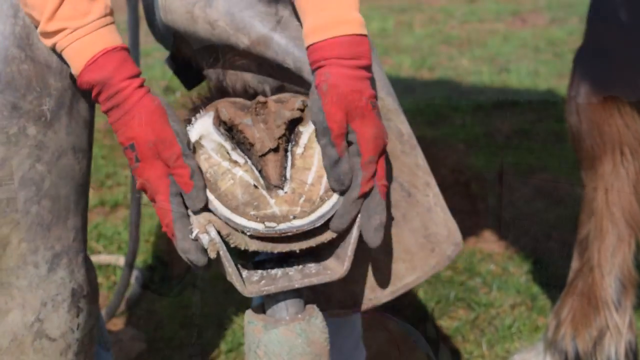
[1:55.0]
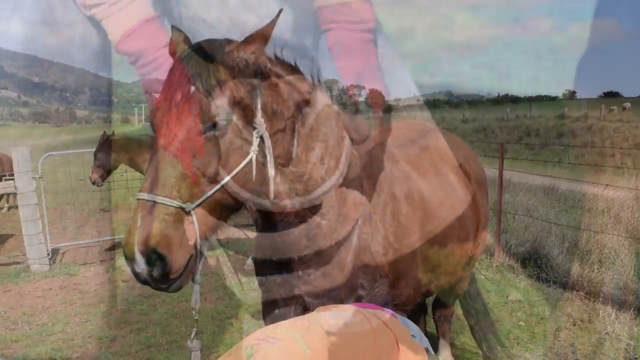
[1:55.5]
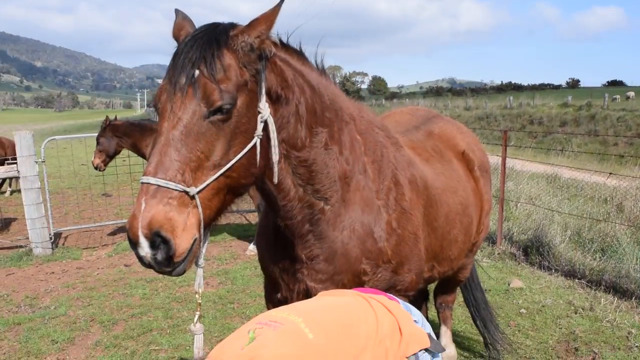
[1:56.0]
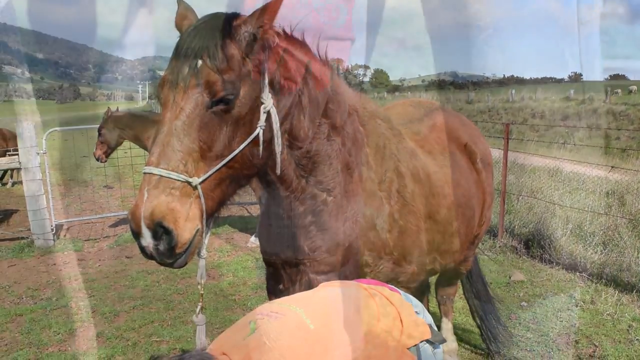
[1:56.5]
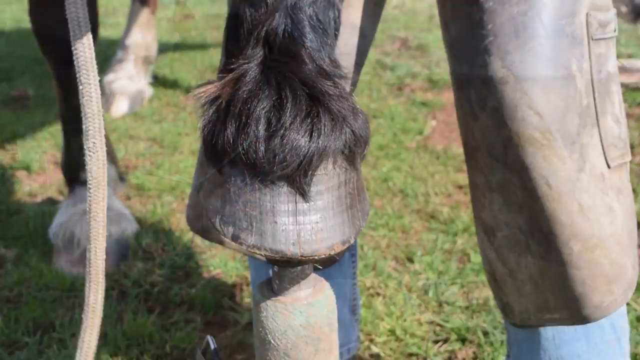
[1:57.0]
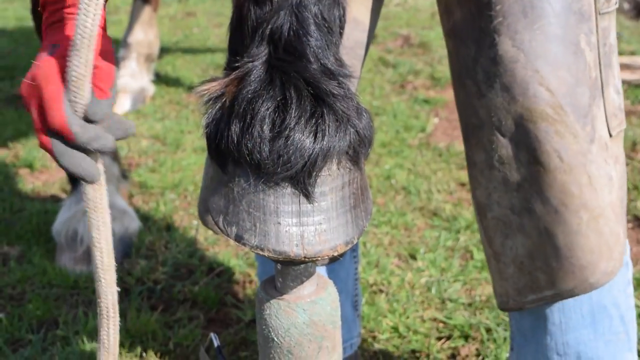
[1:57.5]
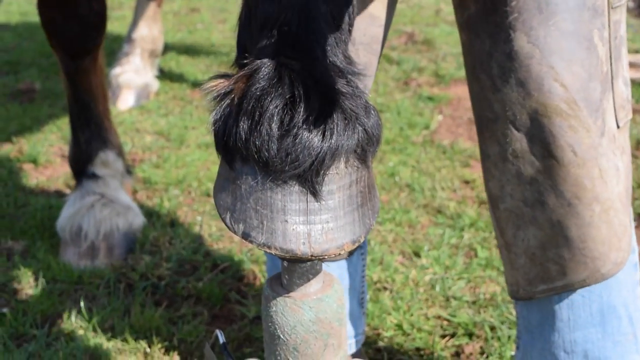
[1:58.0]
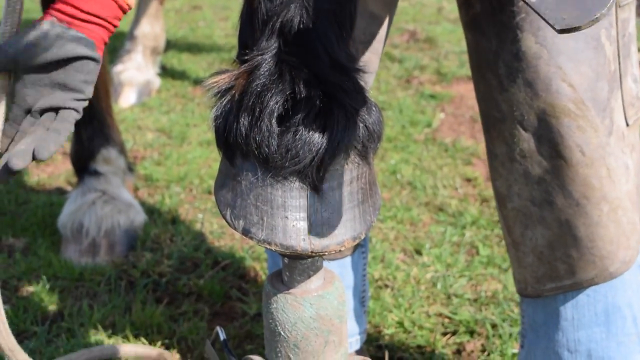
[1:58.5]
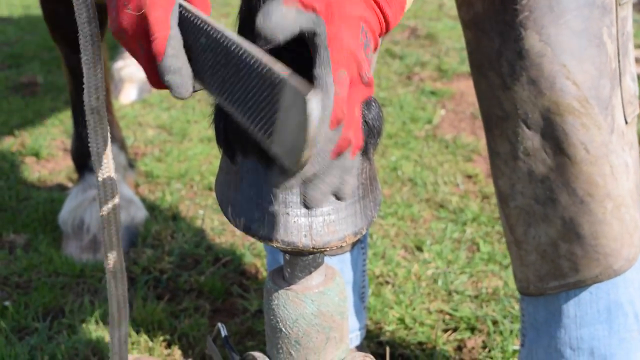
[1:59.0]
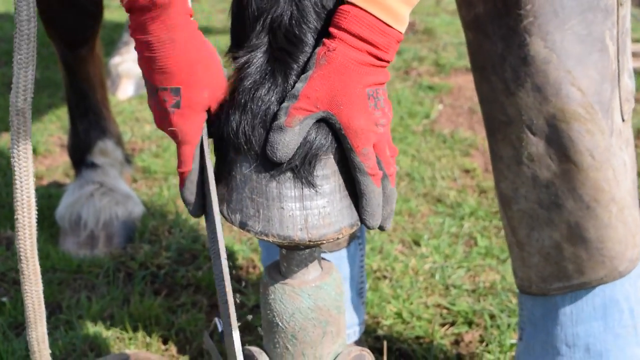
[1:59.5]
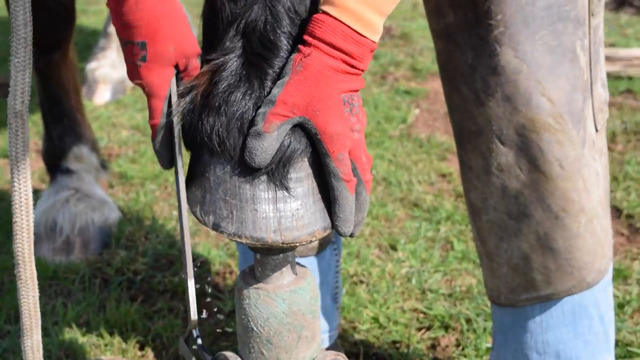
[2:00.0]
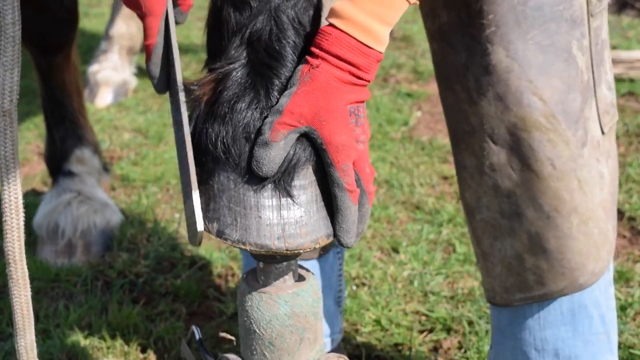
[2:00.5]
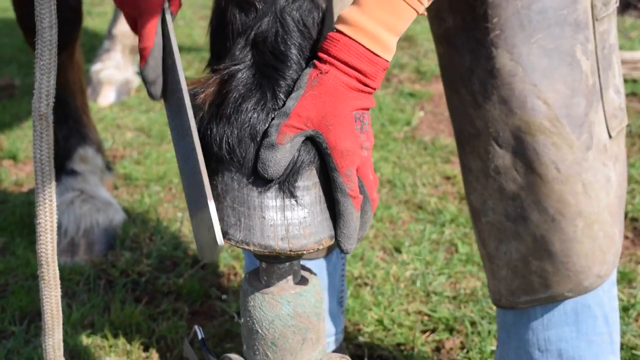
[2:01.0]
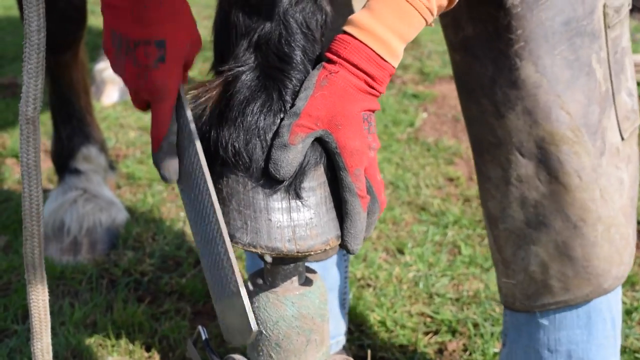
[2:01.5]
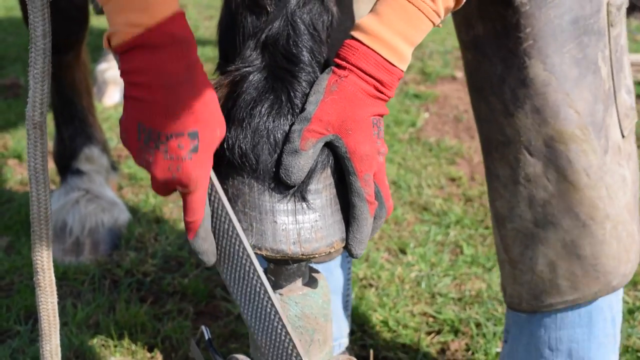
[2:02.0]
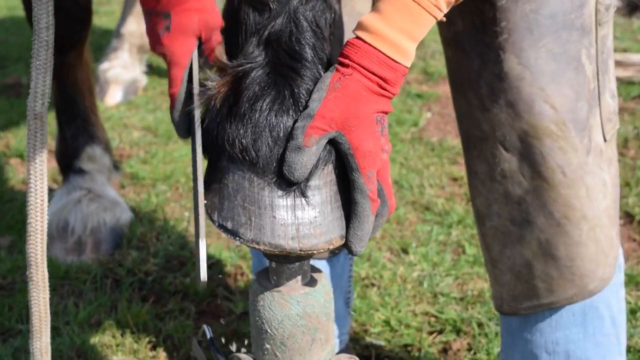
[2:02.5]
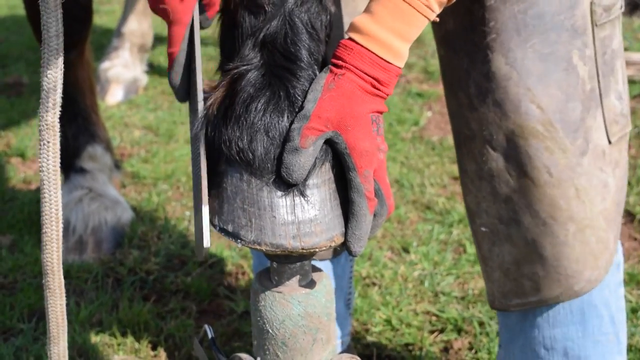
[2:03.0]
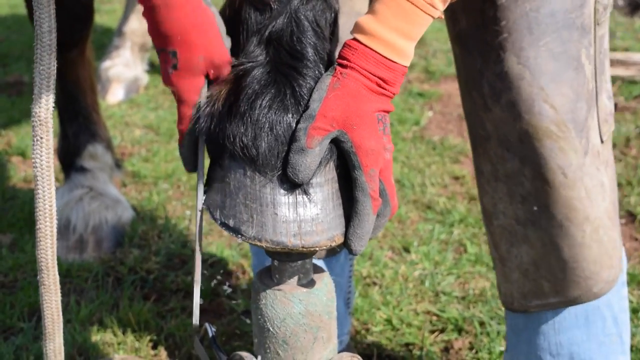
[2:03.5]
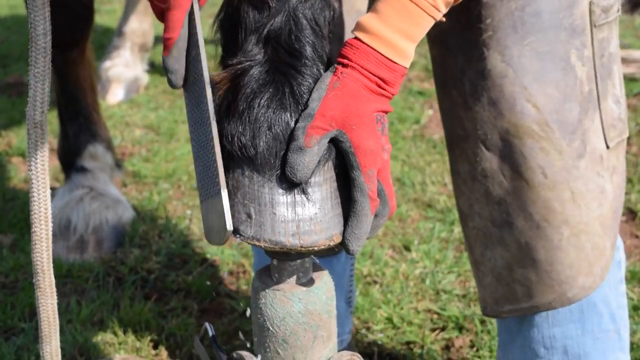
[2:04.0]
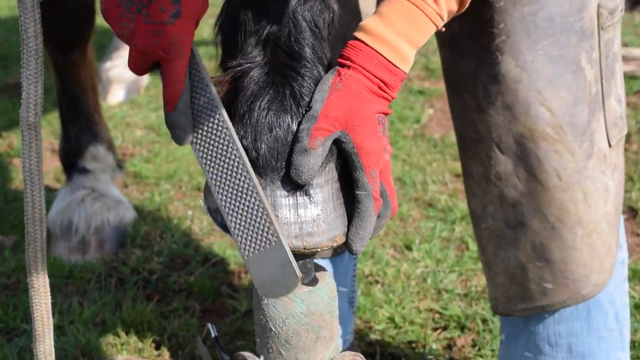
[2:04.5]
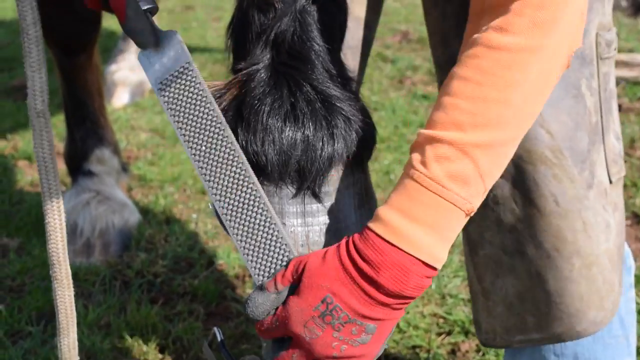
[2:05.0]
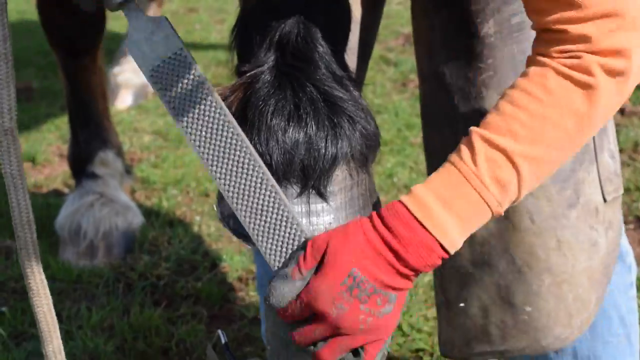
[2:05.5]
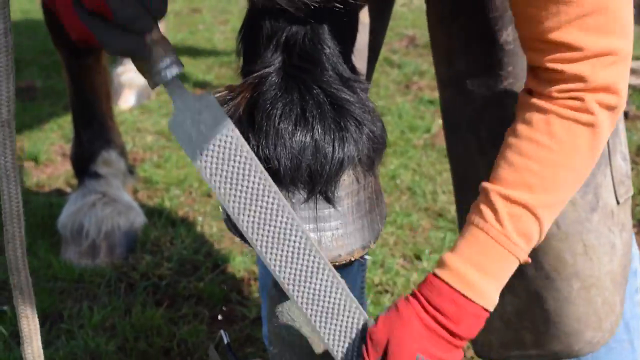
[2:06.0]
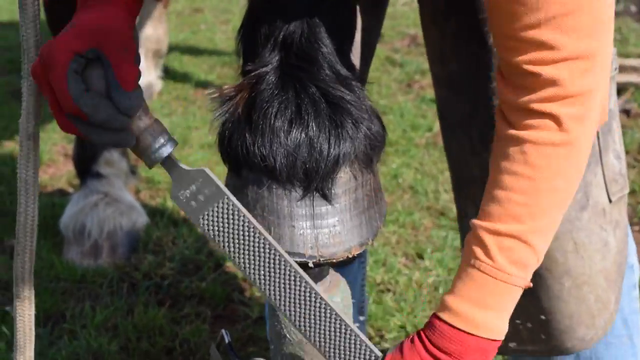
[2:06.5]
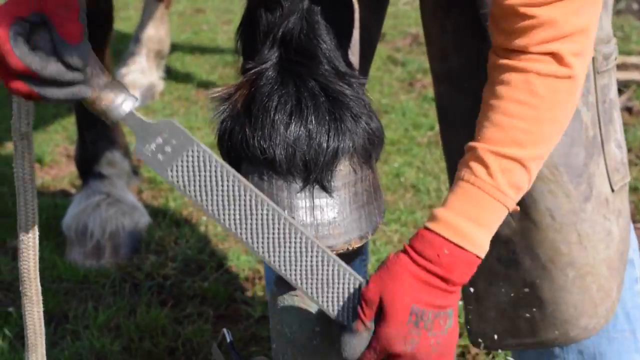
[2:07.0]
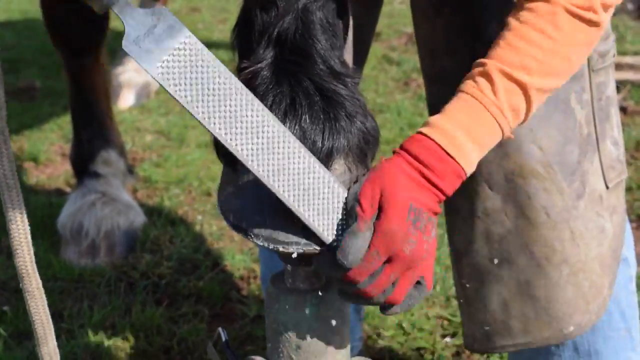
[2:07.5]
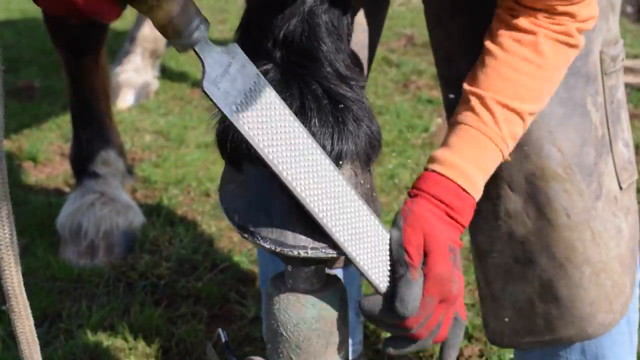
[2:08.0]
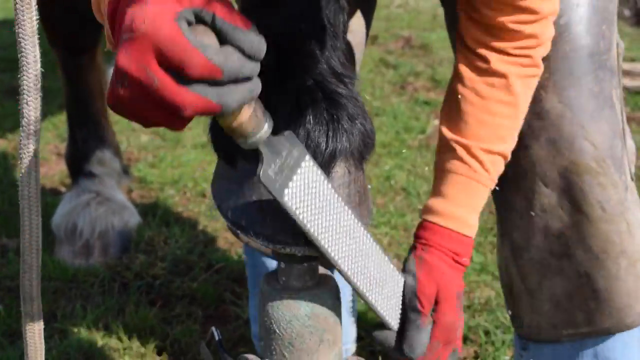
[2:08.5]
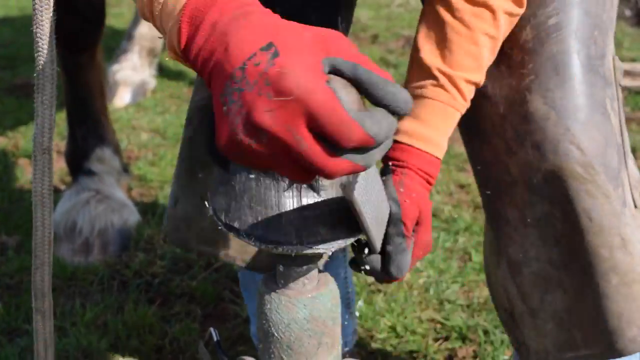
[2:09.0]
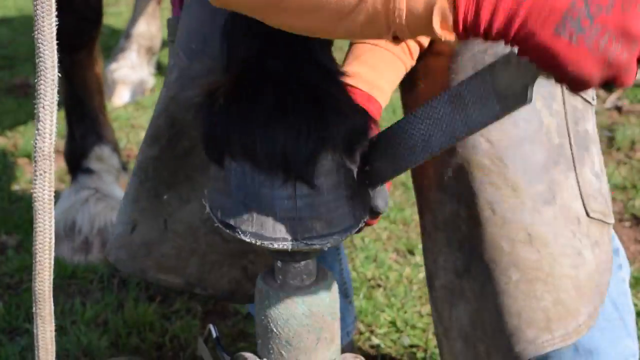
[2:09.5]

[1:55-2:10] She takes the horse's hoof out of the metal holder and sets it flat on top of a different holder. With the big metal file she files downward around the hoof, apparently to smooth all the frayed edges left from the earlier filing, working from the left all the way around to the right. Pieces fly into the air. The horse stands still and looks like he has black hair around this hoof. The hoof appears to be between her legs again. She holds it sturdy with her left hand while filing with her right, then starts using both hands to continuously file the hoof.